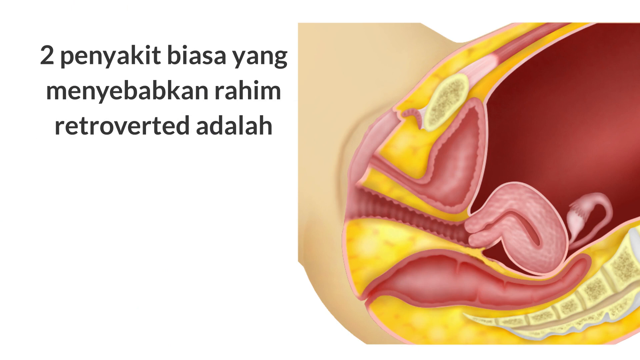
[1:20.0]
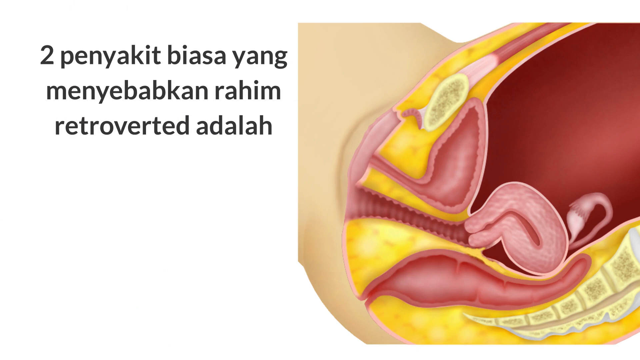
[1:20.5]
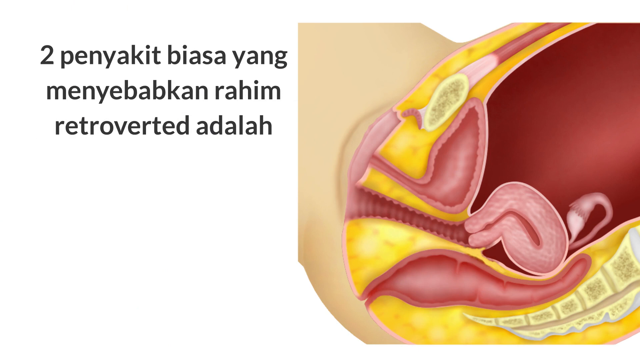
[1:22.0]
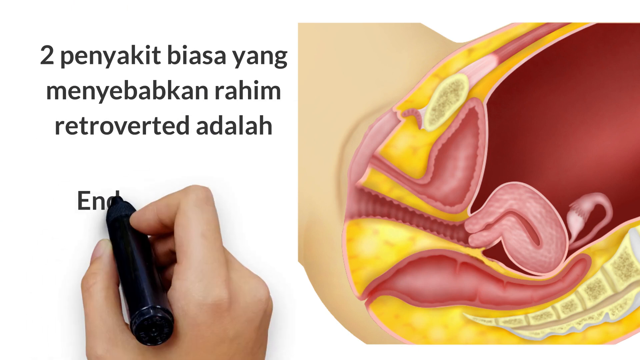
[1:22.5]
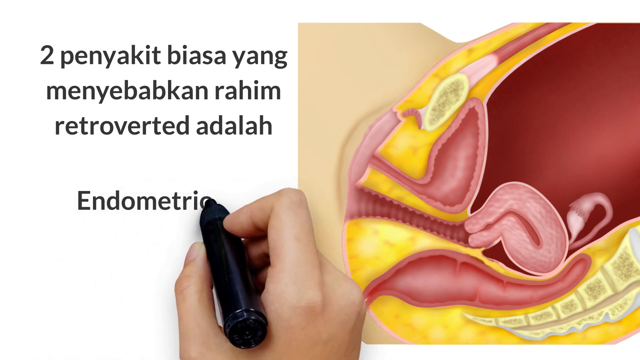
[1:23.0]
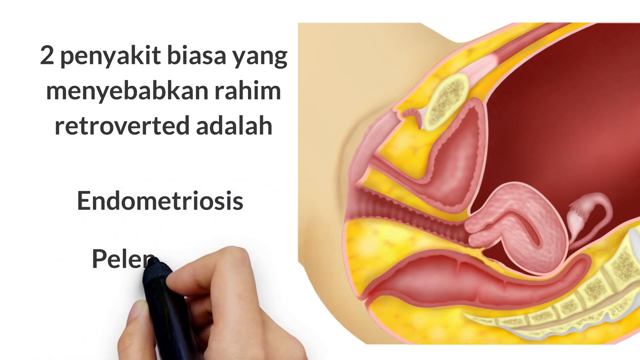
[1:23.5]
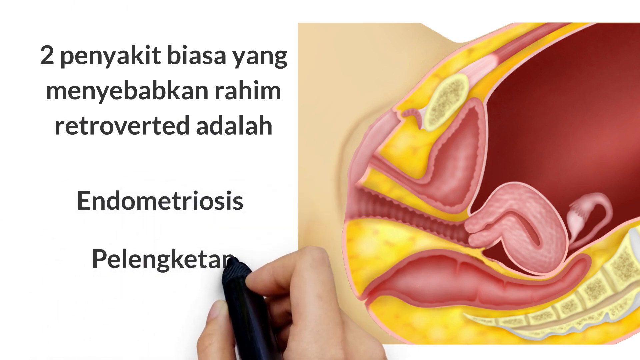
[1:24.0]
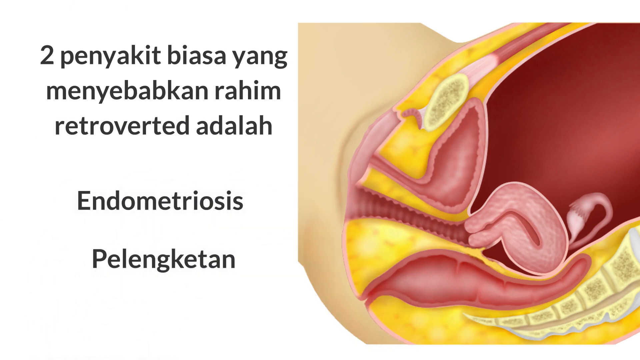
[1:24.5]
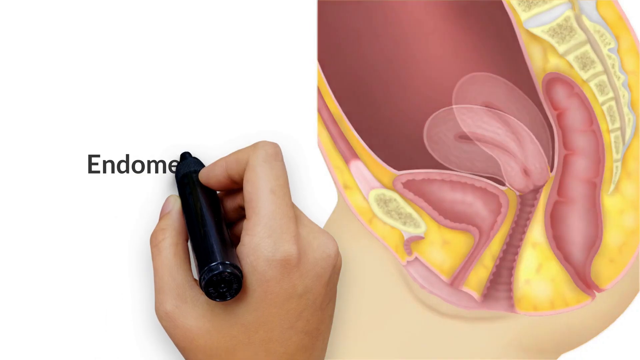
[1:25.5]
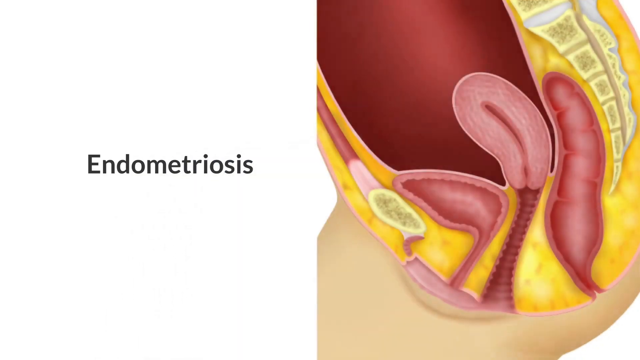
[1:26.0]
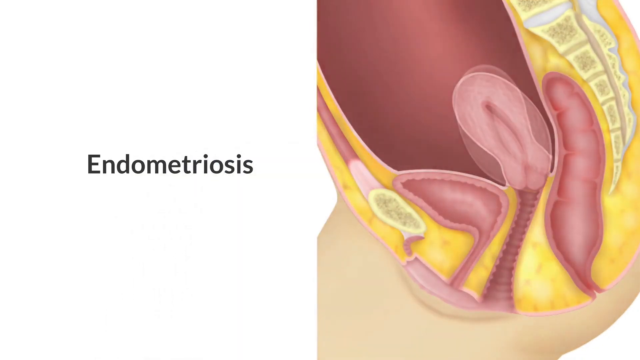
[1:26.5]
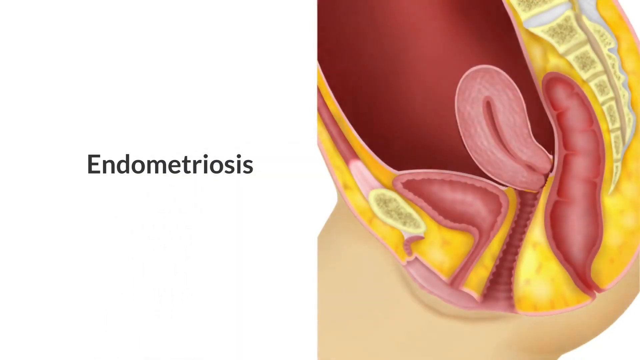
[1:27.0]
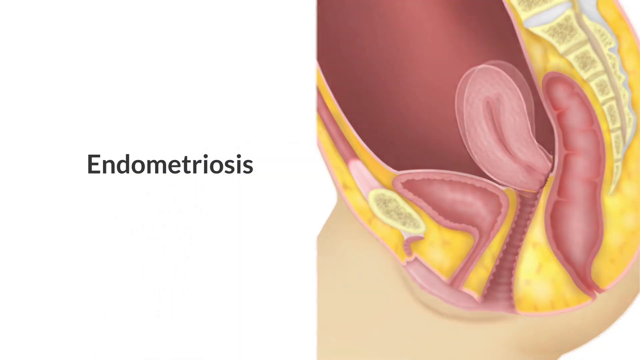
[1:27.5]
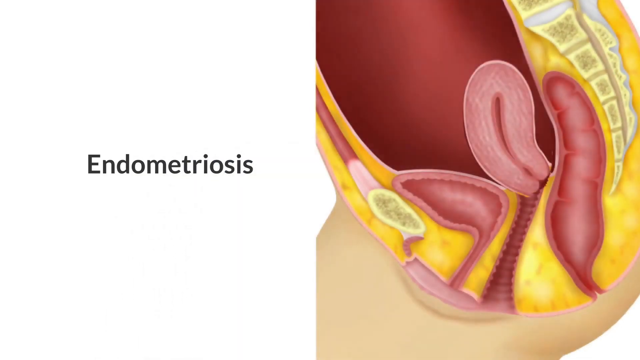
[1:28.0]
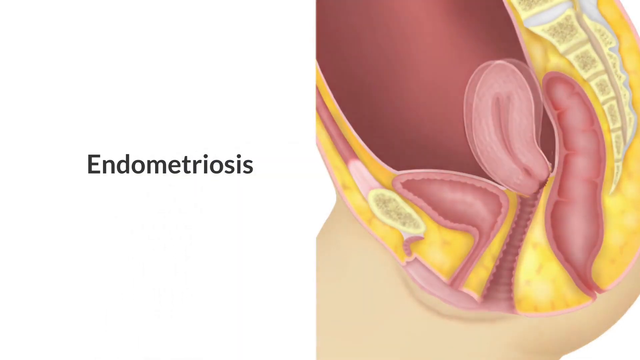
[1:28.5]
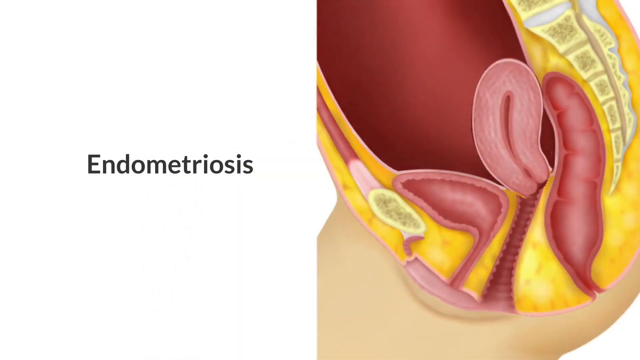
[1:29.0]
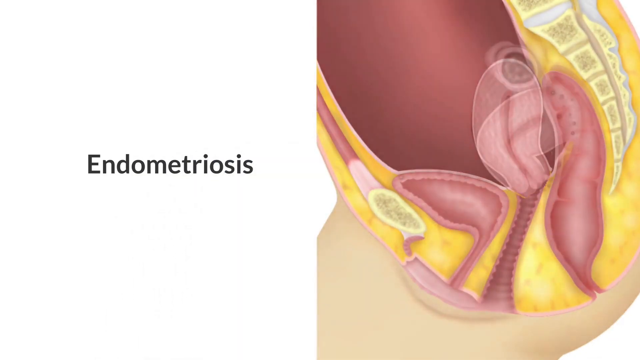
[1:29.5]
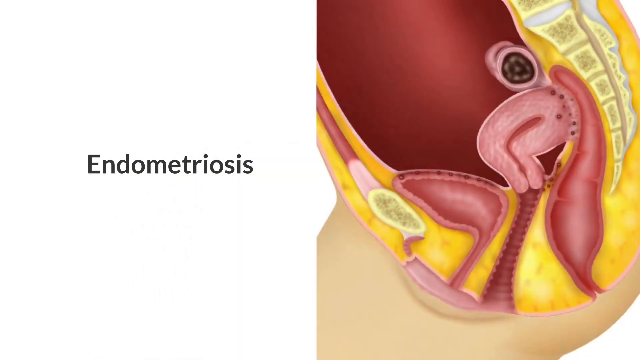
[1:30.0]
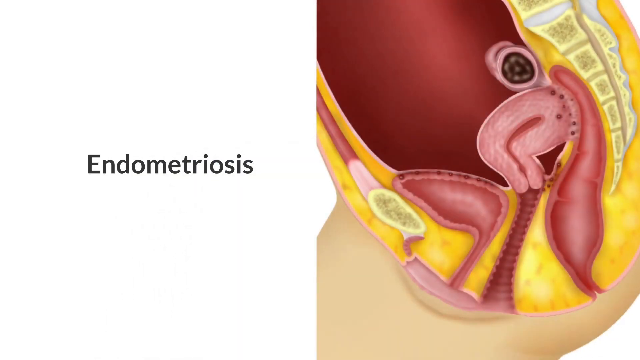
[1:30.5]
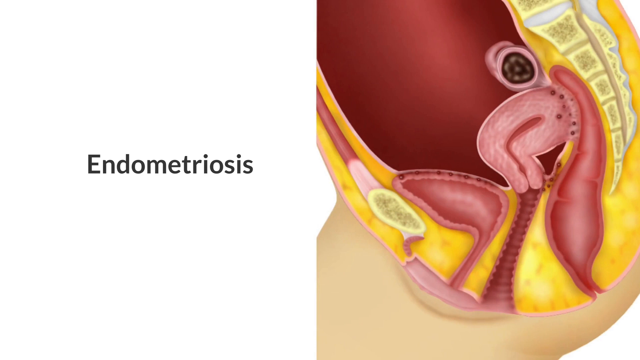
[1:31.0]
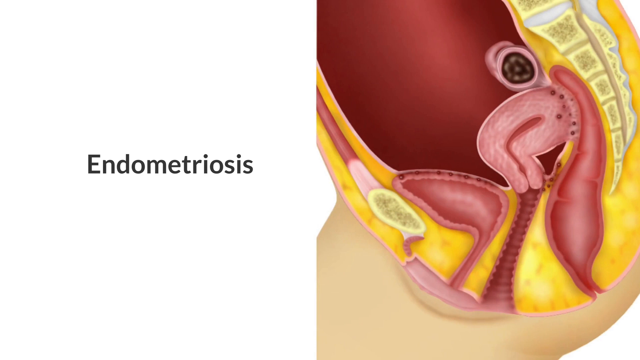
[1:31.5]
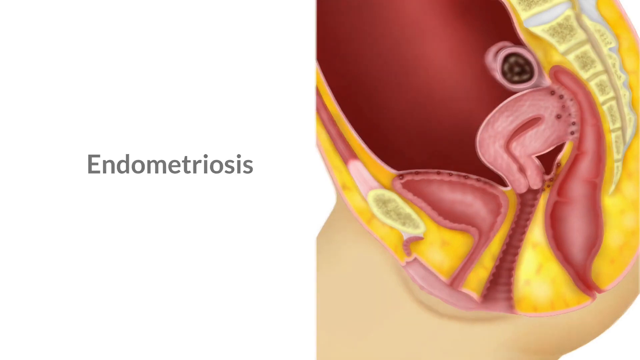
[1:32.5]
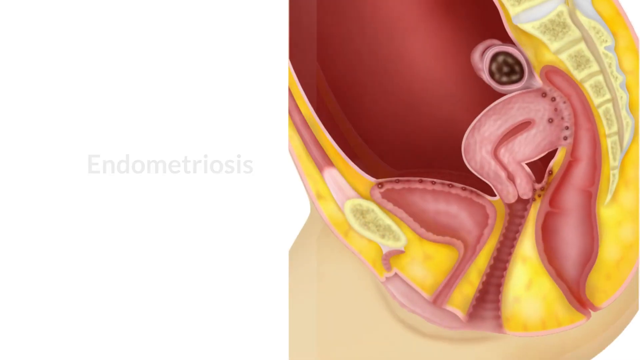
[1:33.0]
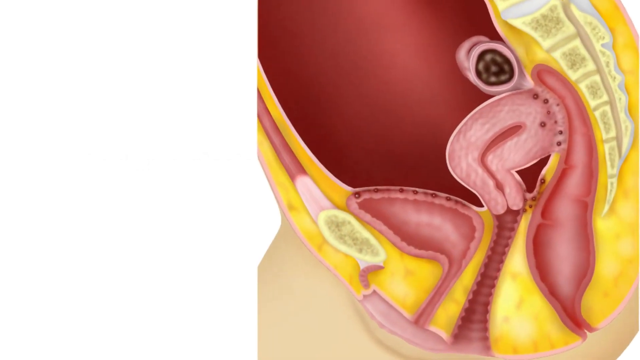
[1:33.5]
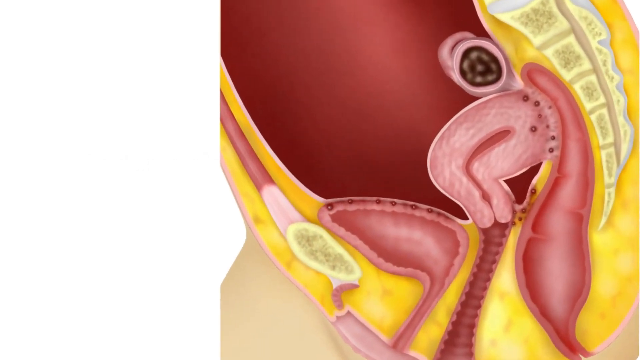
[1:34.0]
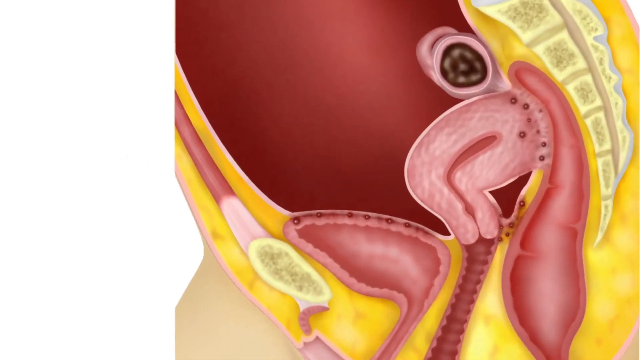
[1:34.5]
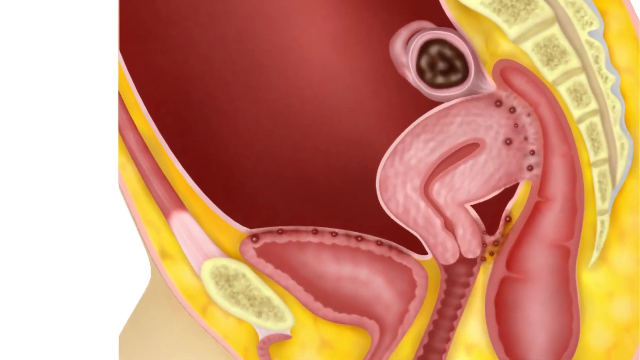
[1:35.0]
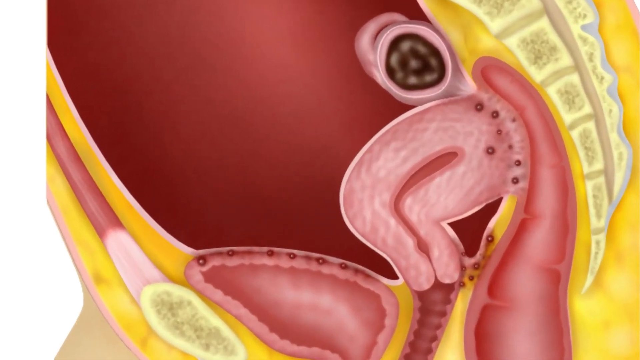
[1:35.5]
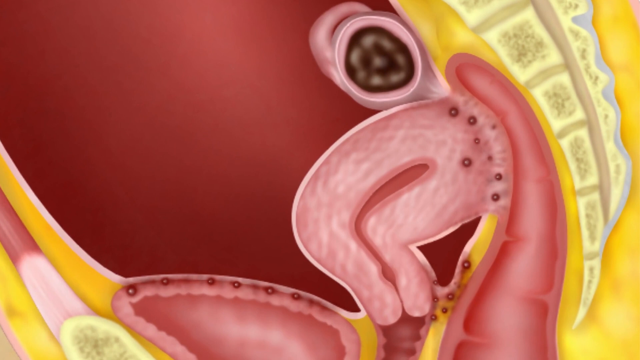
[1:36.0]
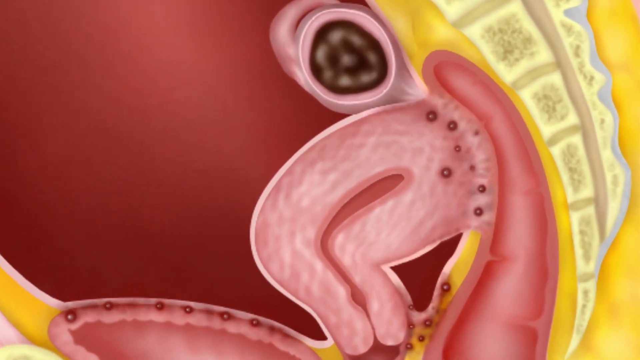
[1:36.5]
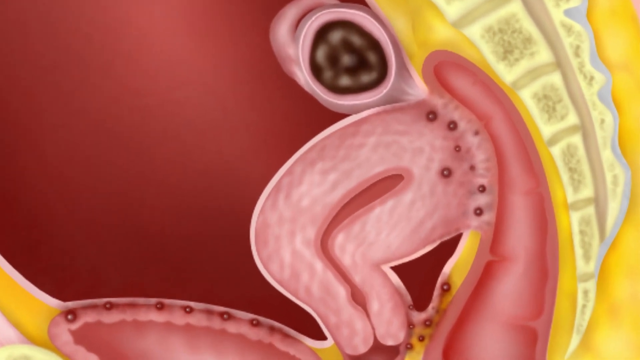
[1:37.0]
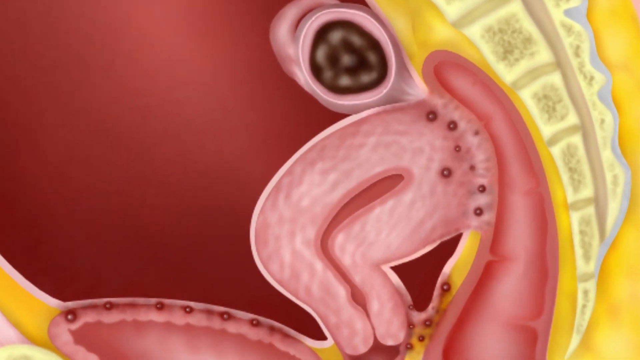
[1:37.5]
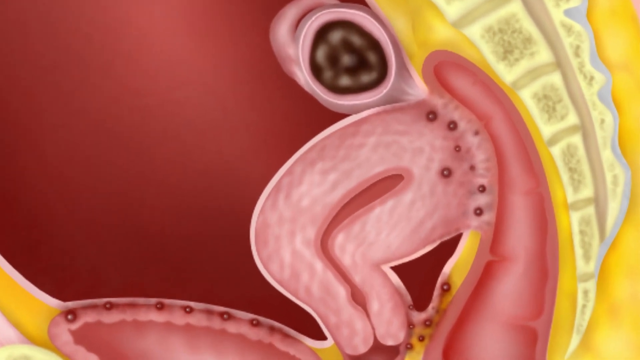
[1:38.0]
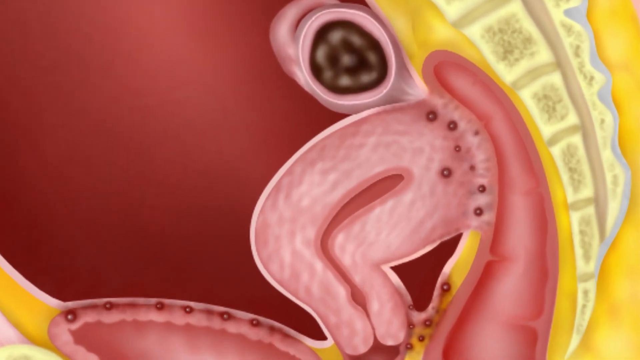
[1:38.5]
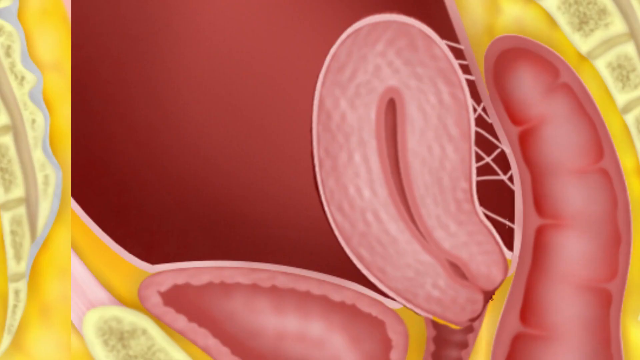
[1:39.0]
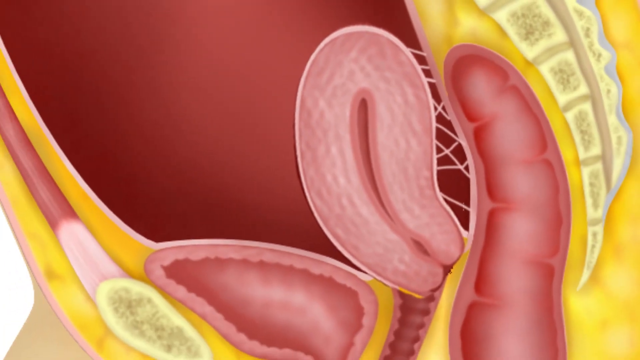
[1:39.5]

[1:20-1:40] A uterus is shown from a side view, with writing to the left in which the word "endometriosis" is recognizable; the rest is in an unfamiliar language, and a hand with a pen is writing it. The screen moves to another picture of a uterus, again from the side, moving from a down position to an upright position. Then the screen just says "endometriosis", written by a white hand, and a different picture of a uterus appears, sort of upright, with what look like spots on it and a big, round, darker spot. The view zooms in closer to the uterus and then pulls back out to show the whole uterus.